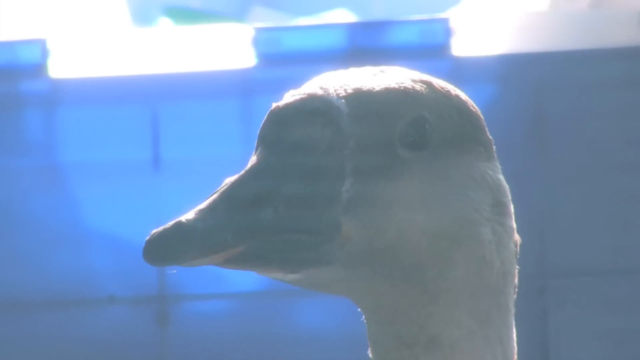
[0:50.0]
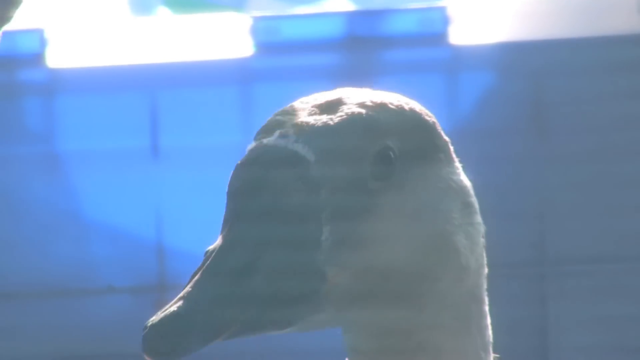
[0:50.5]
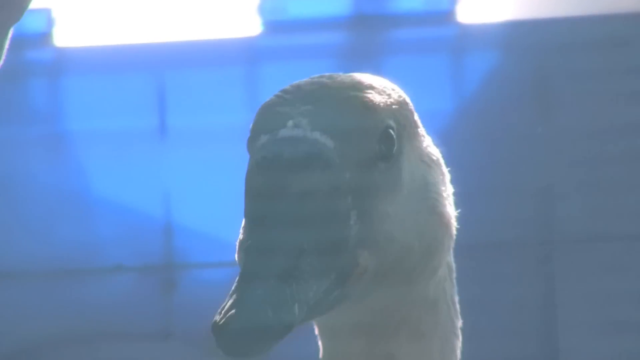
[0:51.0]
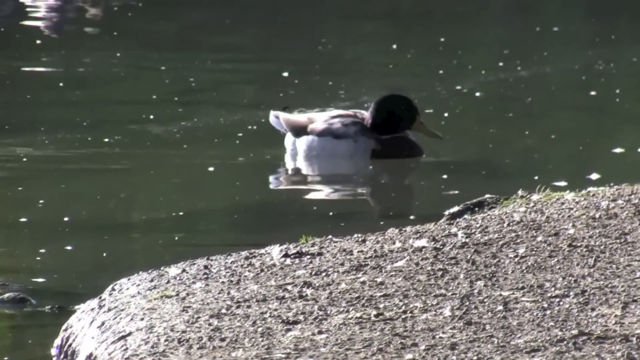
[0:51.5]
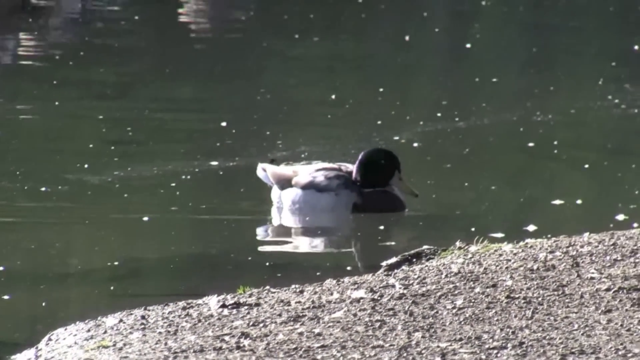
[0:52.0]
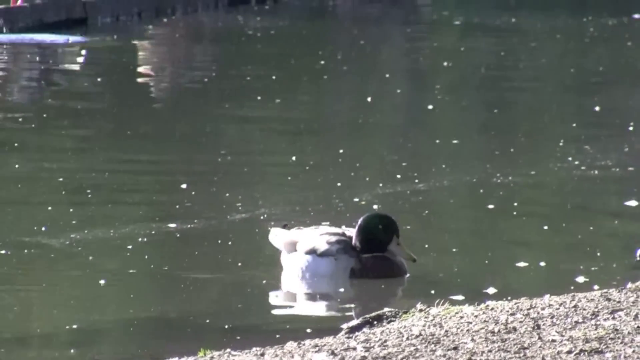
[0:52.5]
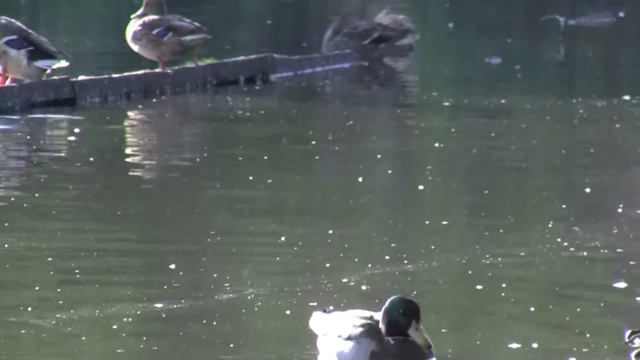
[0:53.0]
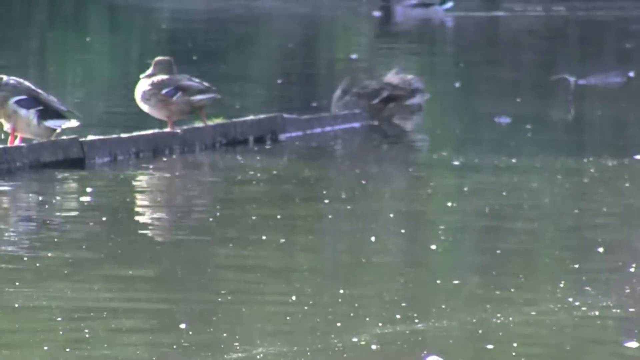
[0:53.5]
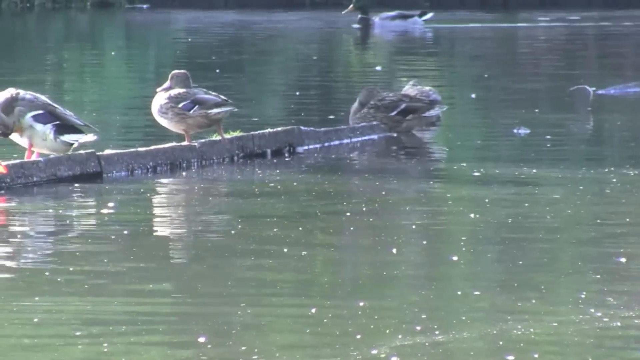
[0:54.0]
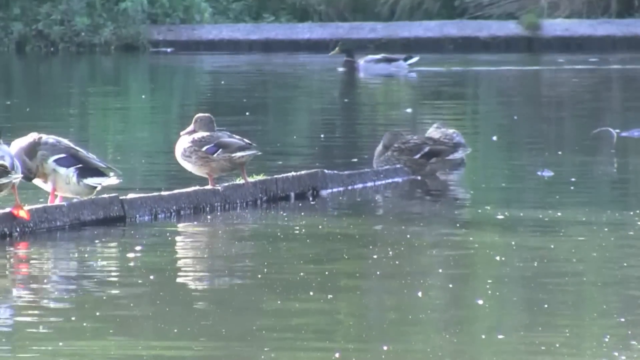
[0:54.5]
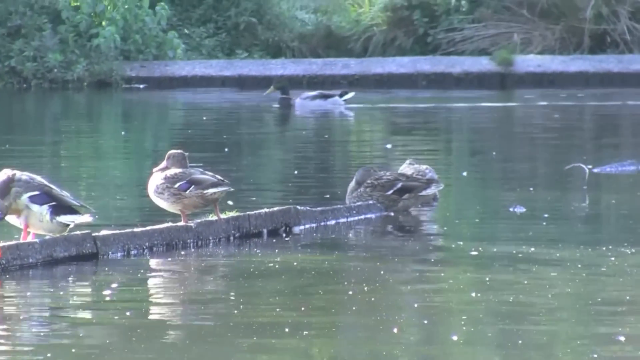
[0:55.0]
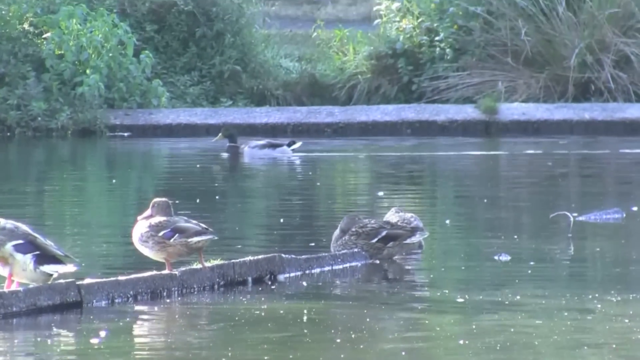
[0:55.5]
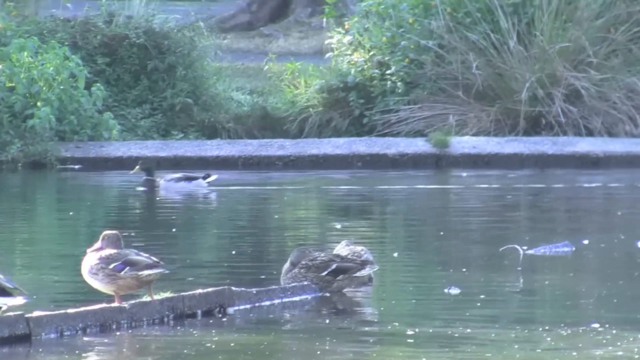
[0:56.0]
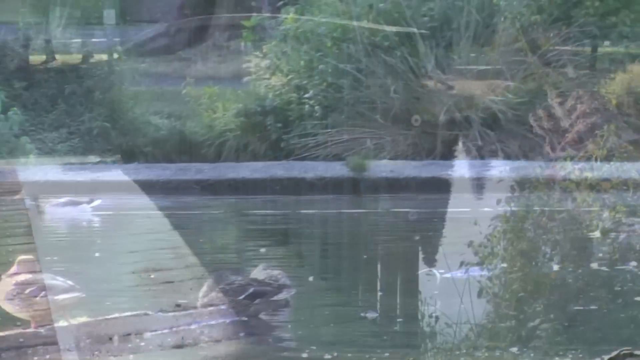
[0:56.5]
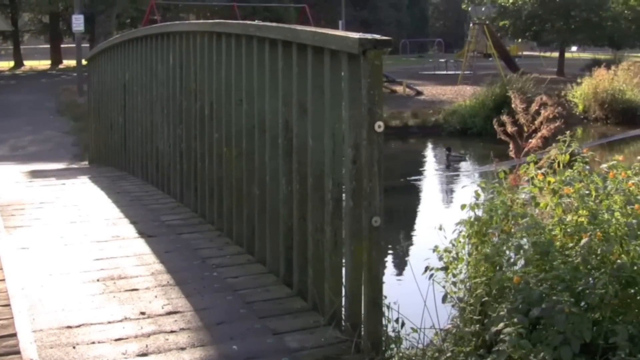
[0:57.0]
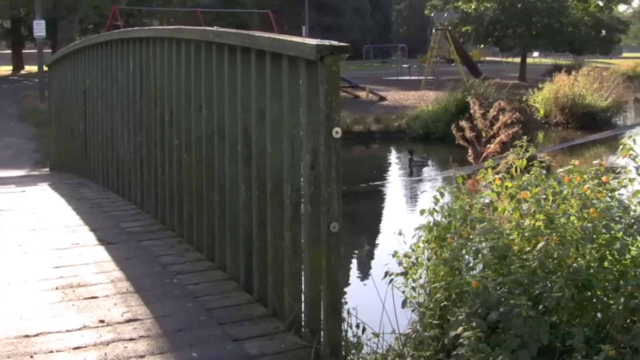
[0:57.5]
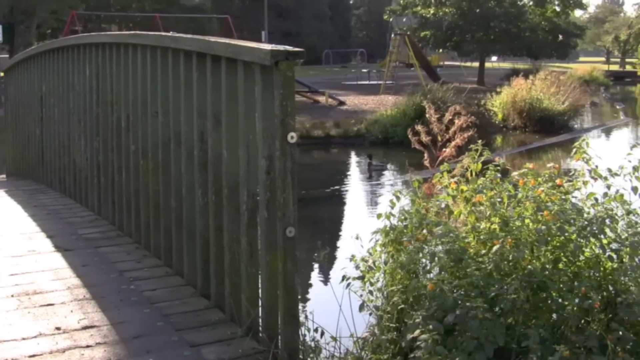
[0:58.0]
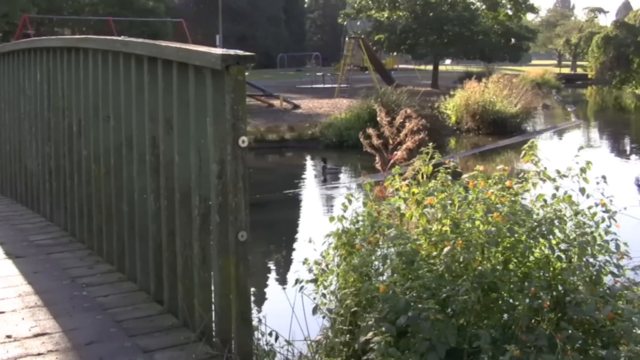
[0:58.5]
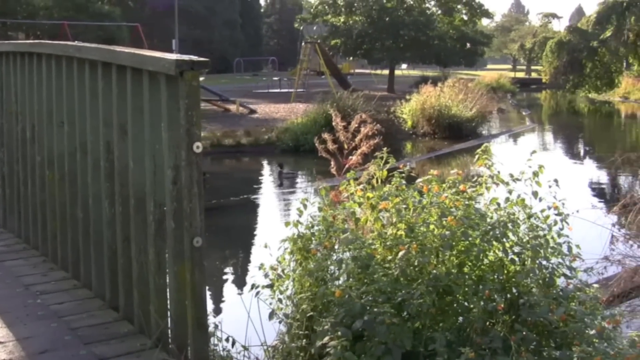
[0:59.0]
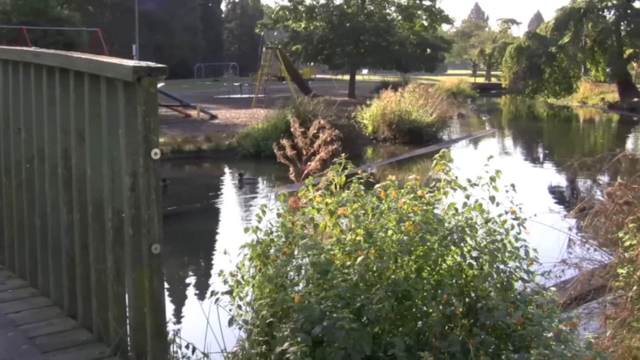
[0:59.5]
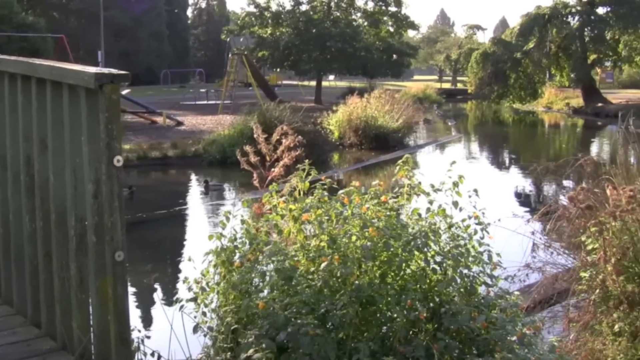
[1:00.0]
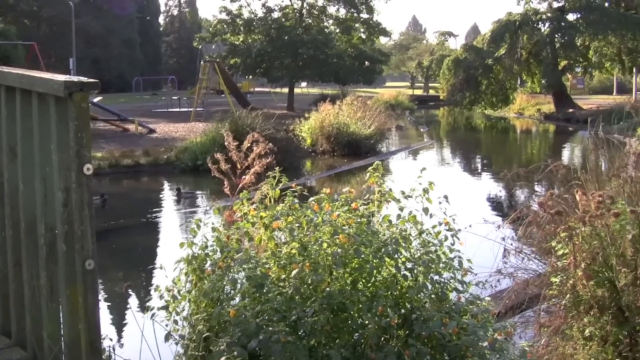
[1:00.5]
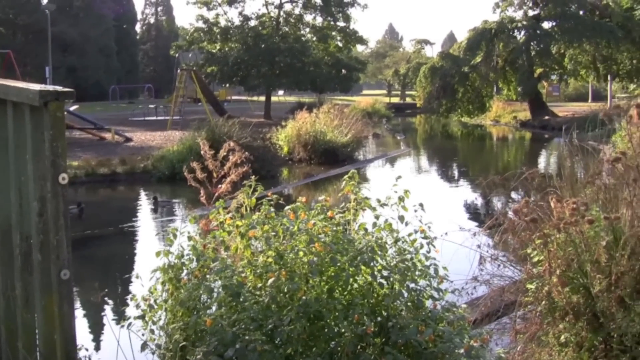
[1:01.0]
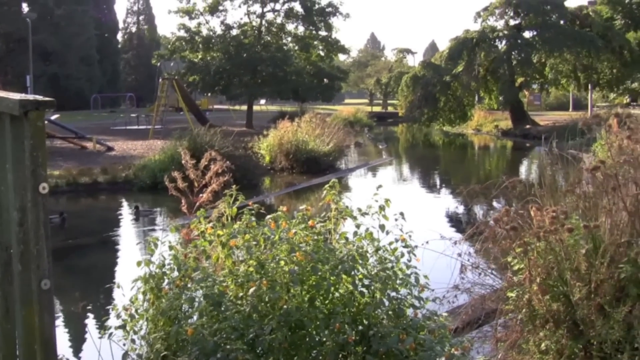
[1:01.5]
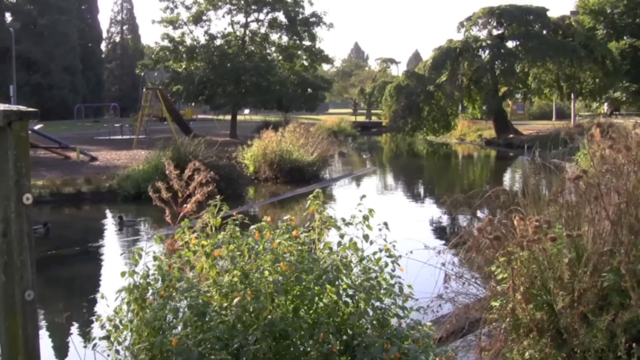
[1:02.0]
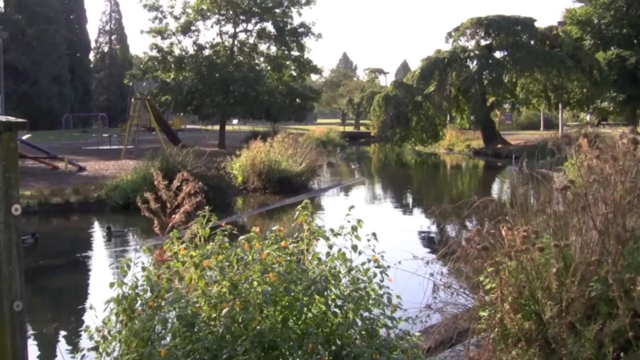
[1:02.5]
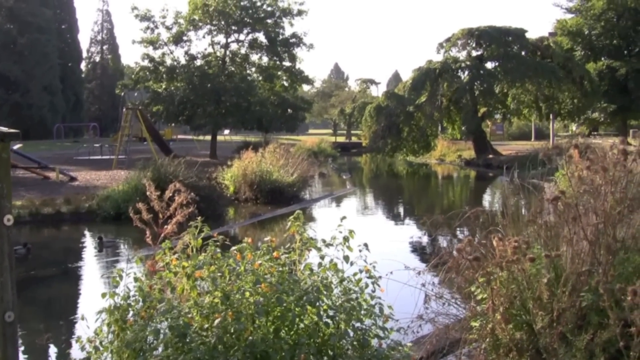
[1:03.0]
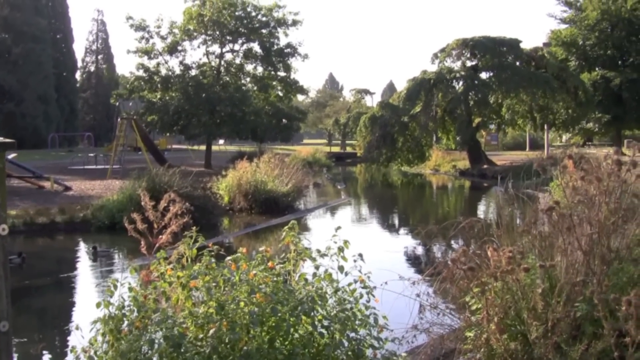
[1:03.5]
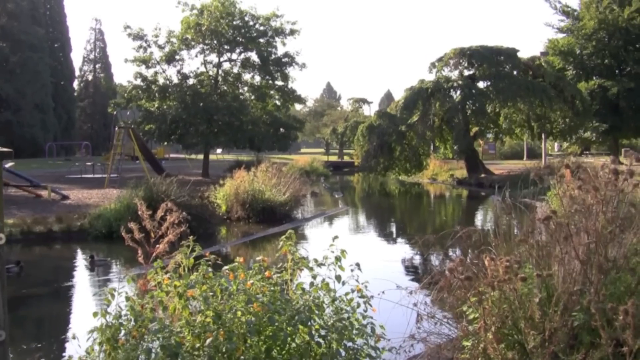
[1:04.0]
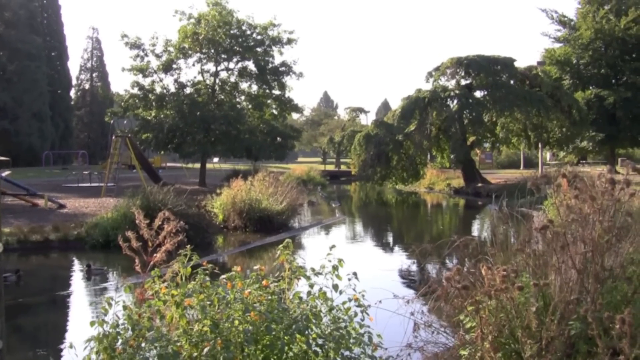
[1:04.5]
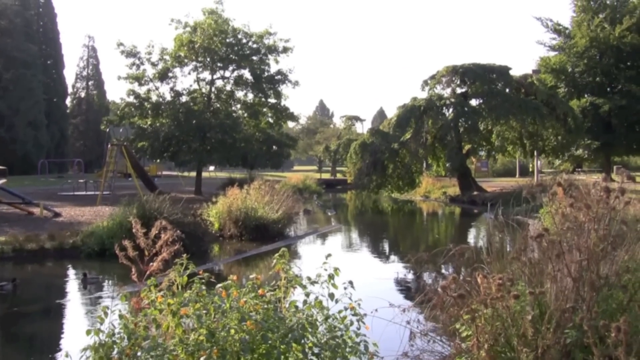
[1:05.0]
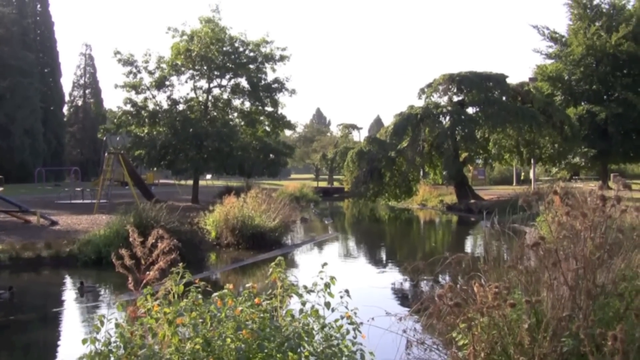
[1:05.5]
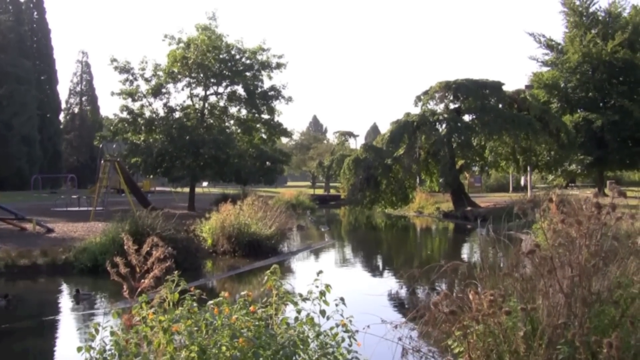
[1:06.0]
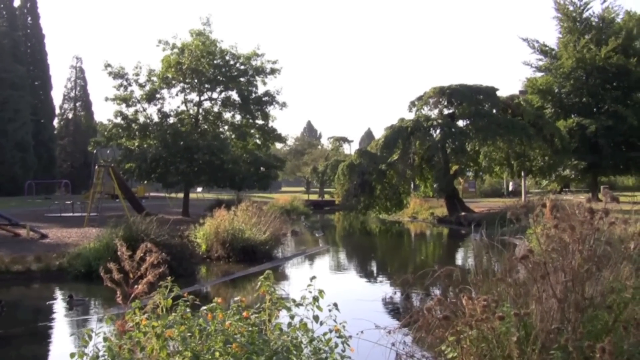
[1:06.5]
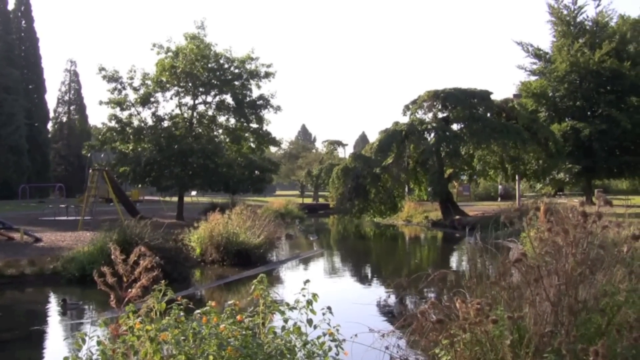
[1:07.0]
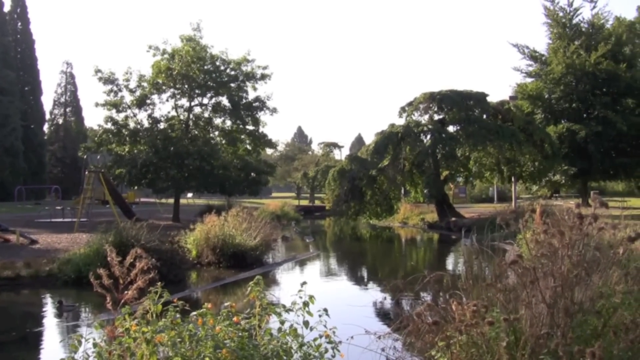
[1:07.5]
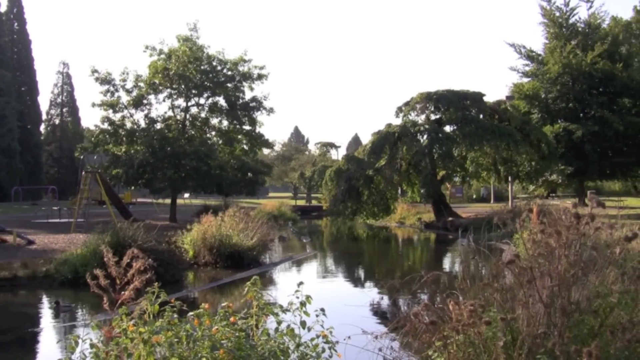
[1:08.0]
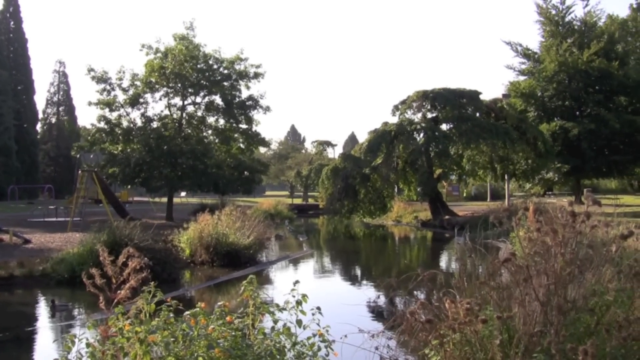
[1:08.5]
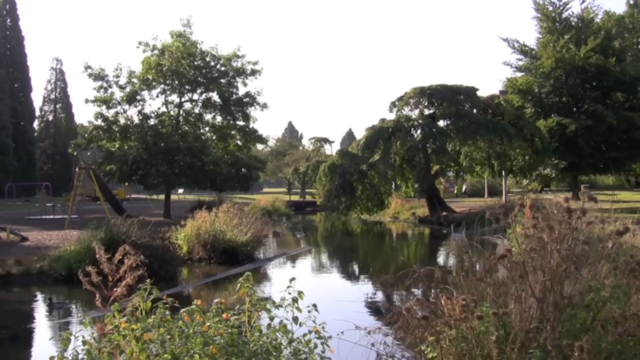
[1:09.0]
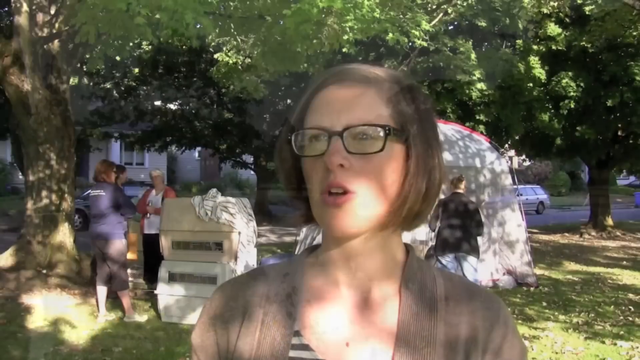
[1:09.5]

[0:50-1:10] The camera is zoomed in on a duck's head: the head is white, with a black bill and a black eye, its left eye looking directly at the camera. The video cuts to a mallard on a pond near the shore, with a green head, a yellow bill and a white body. The camera pans upward to show multiple ducks standing on a wooden log extending into the pond, while one mallard swims along the rear edge of the pond. The camera pans right to show aquatic plants. Next comes a wooden bridge passing over a small pond area, with a guardrail on the right; the camera pans right to reveal a children's playground on the left side of the pond area, with slides, swings and other playground equipment. Panning further right, it shows a large tree bent to the left, its branches extending over the water, then pans up to a very bright, clear, sunny sky.